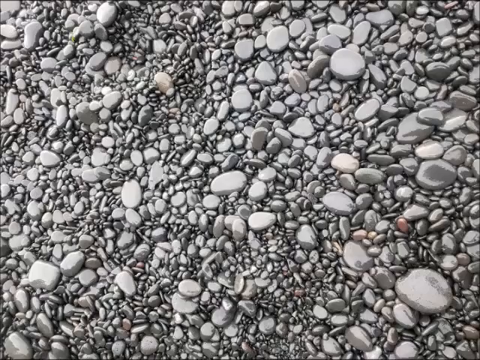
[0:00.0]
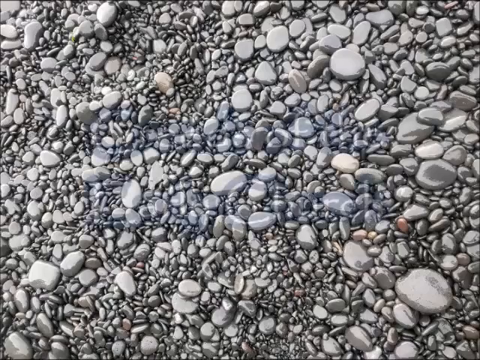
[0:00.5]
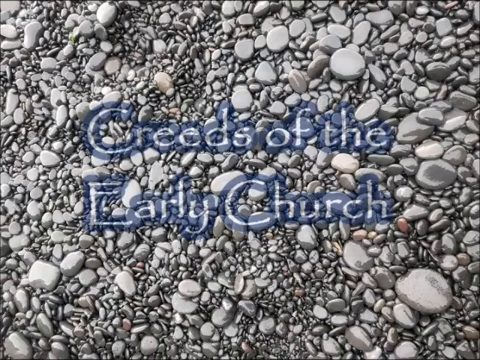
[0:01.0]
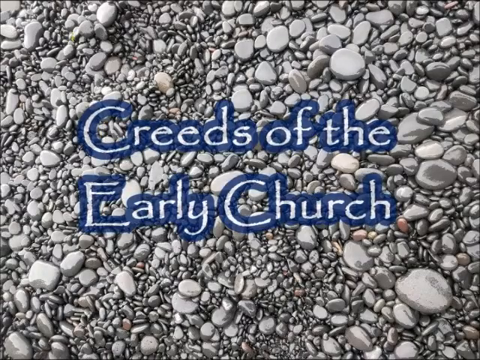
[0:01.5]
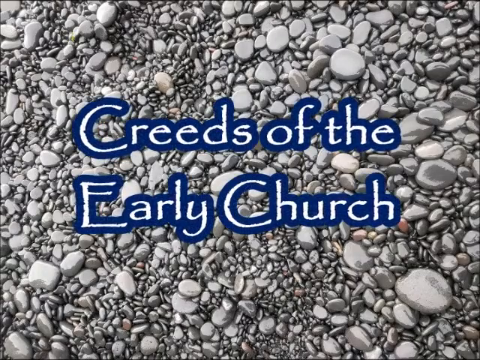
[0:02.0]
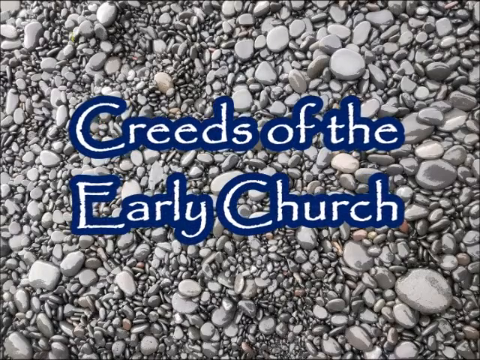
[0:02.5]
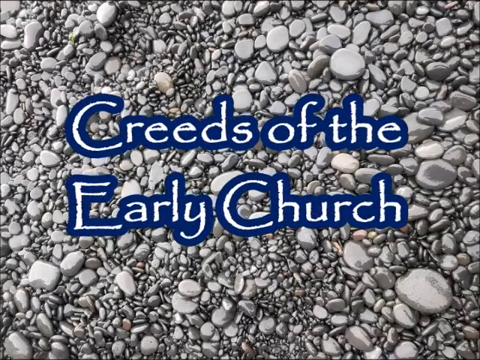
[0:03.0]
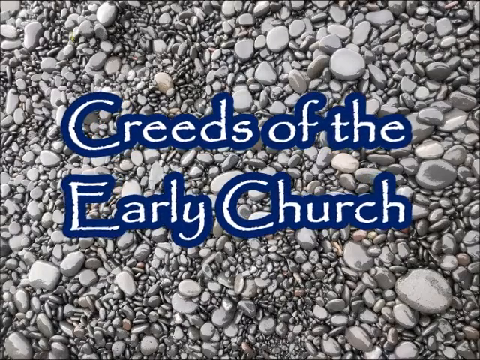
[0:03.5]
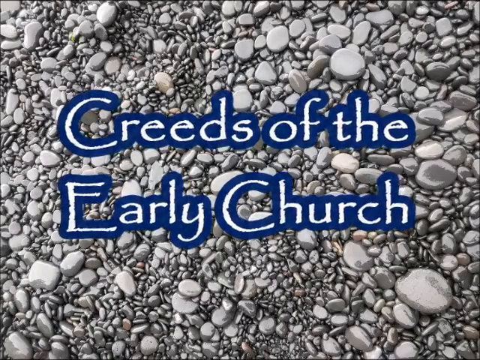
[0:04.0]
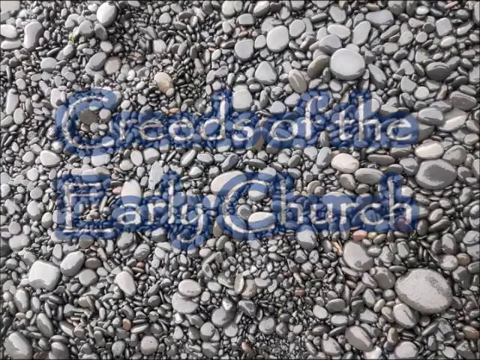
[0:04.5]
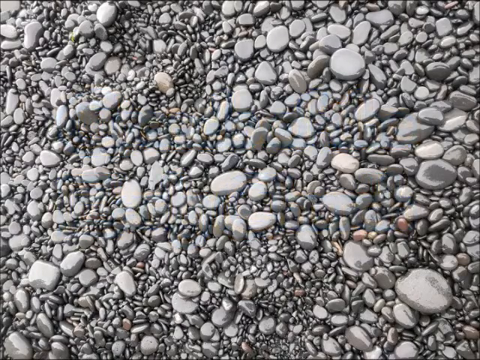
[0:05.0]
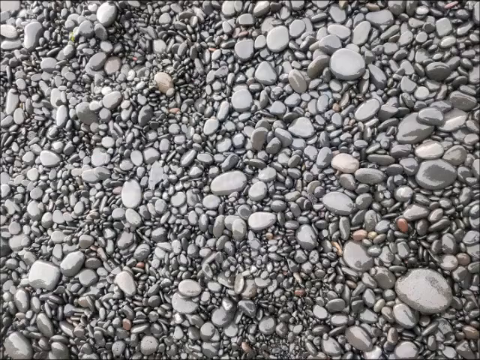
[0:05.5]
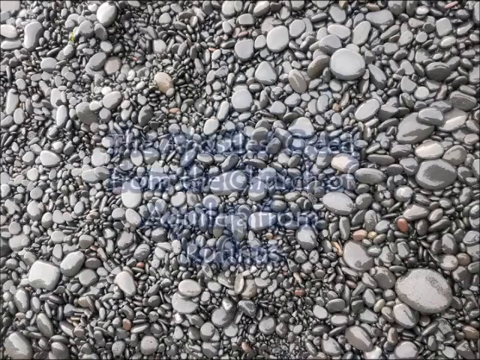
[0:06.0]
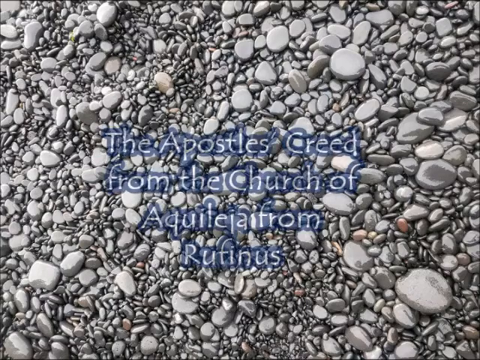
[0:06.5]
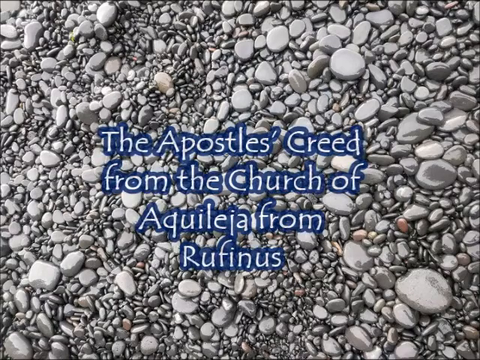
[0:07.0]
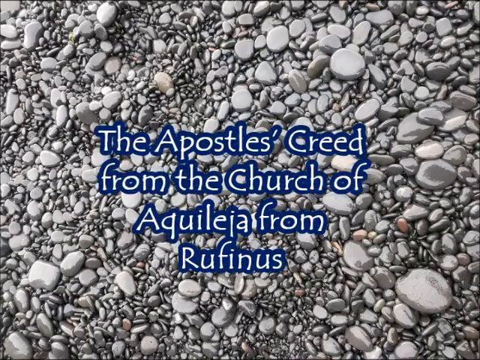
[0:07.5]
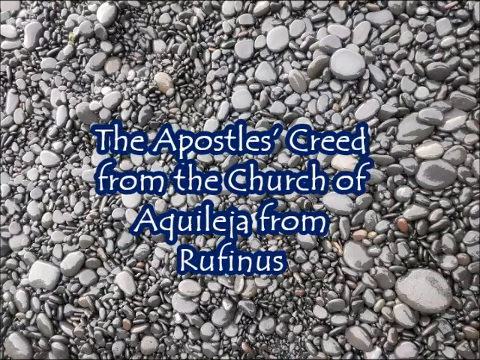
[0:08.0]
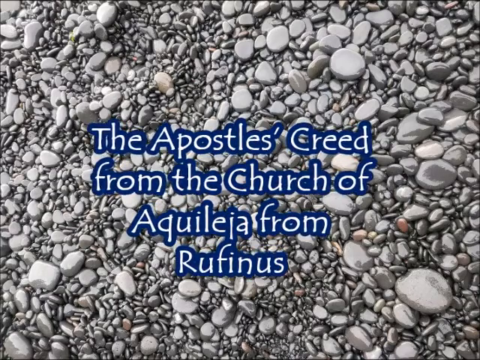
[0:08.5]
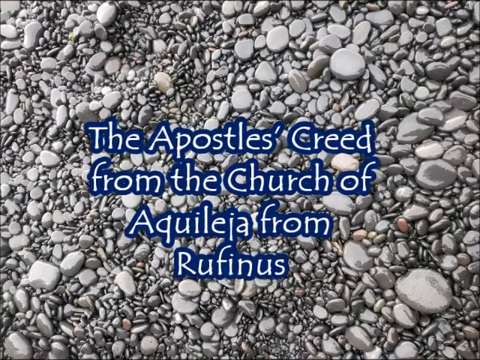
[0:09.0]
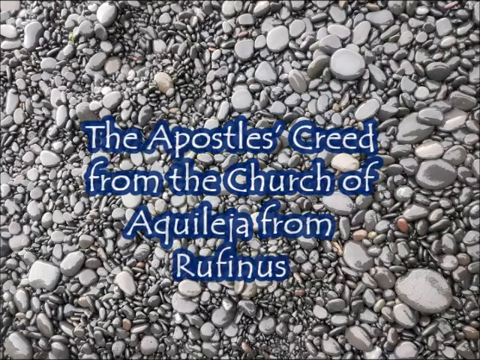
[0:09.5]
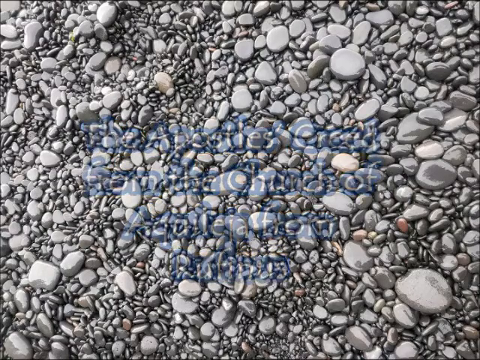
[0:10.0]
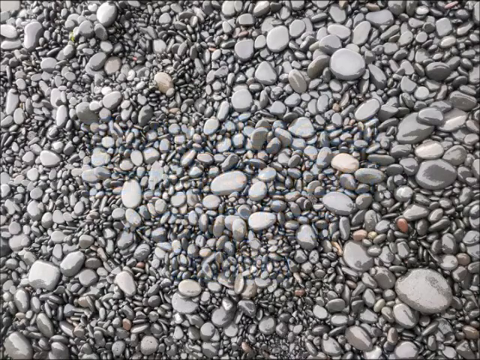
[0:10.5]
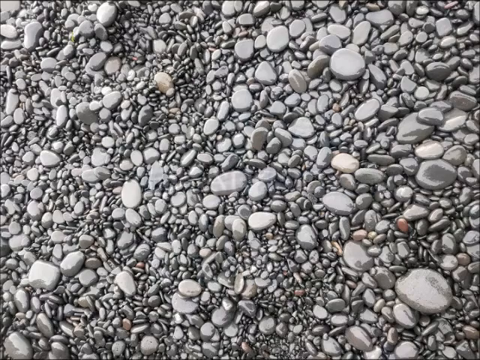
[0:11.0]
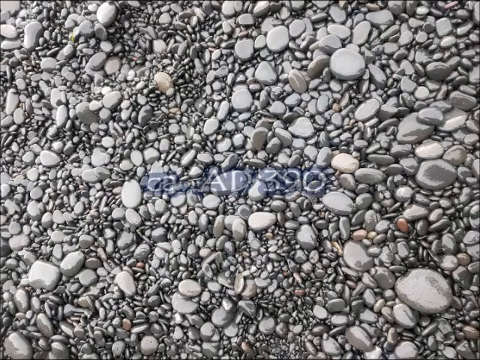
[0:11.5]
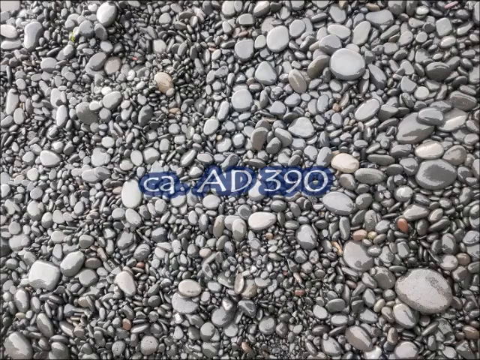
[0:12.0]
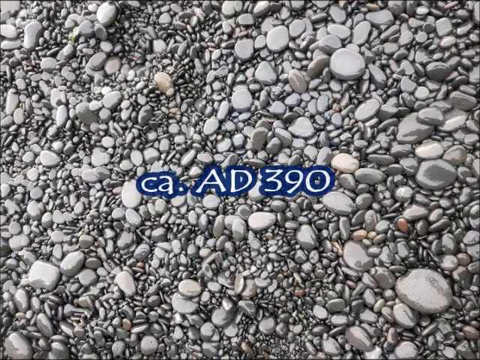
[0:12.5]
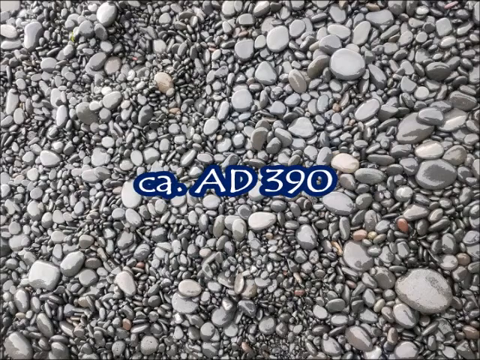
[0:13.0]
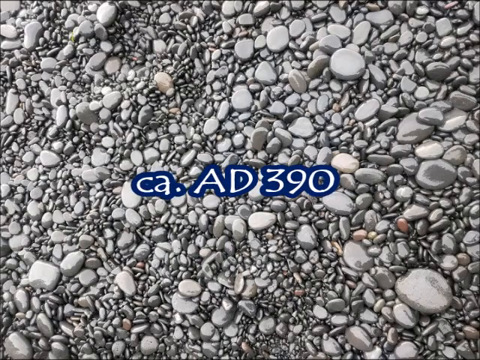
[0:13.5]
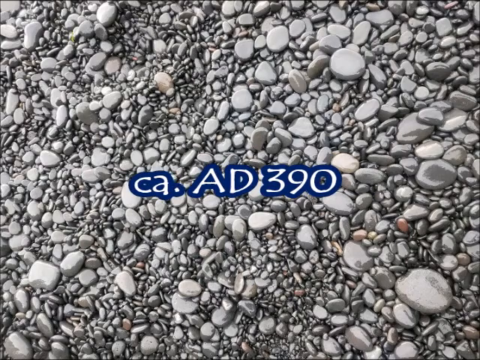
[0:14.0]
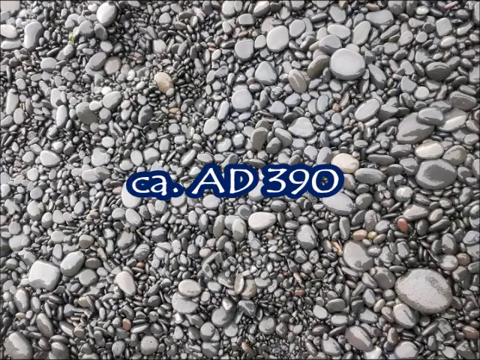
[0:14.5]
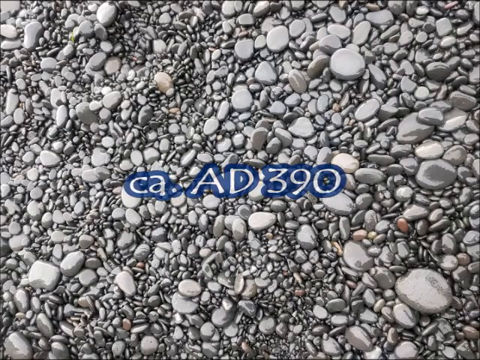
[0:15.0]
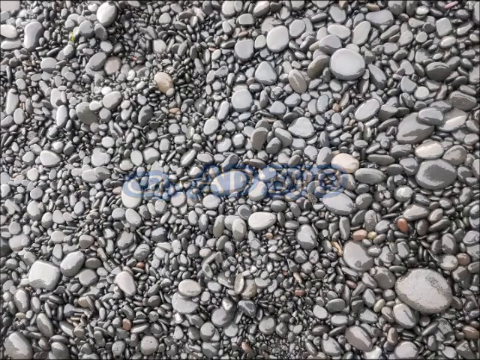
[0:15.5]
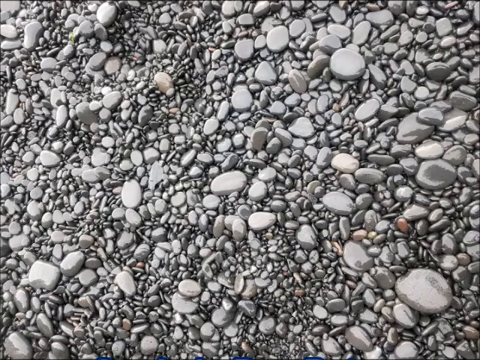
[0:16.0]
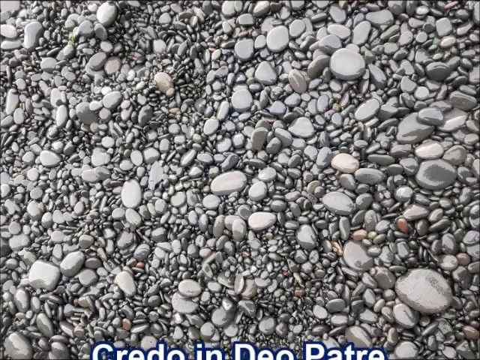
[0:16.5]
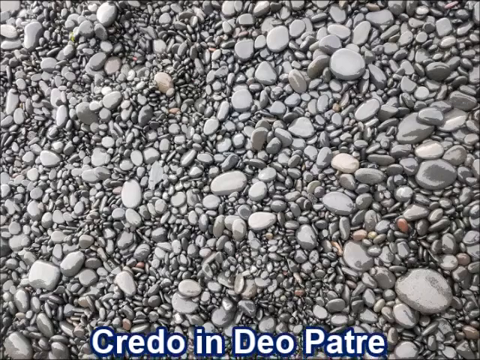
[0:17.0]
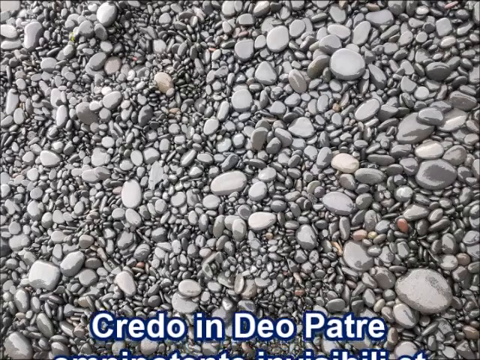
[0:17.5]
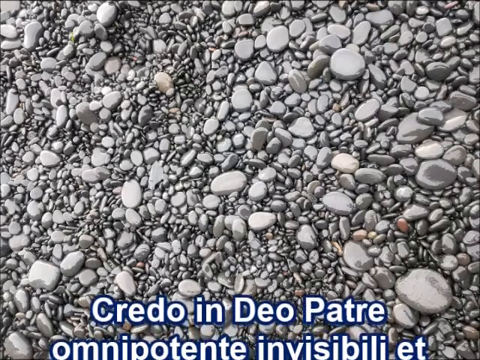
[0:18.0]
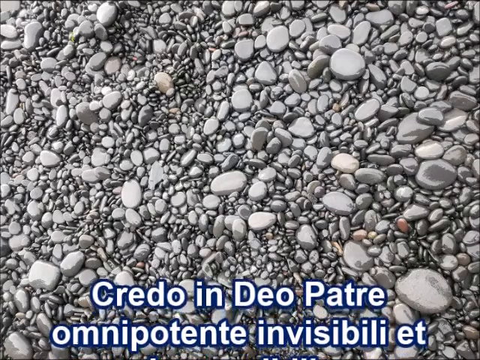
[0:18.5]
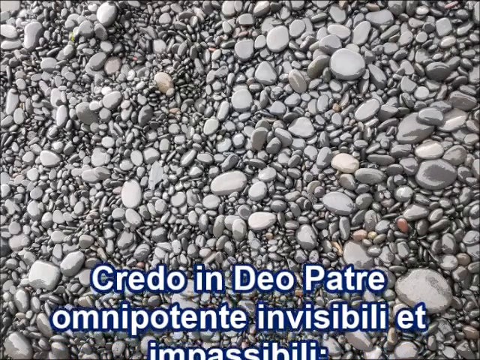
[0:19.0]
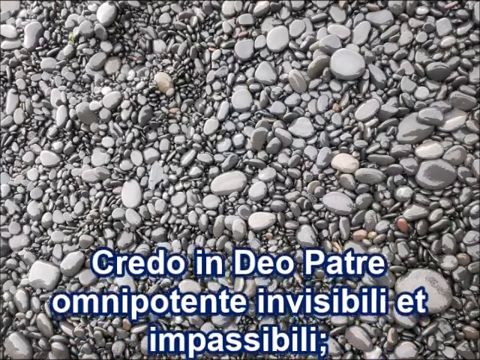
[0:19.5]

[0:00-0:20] The camera looks down at the ground, where there are many variously shaped rocks and pebbles. They range in color from white and silver to light gray and dark gray, with a few tan and brown rocks scattered throughout. Some rocks are very small and others are very large. After a couple of seconds, words appear in the center of the screen in white letters with a dark blue outline. The first words read "CREEDS OF THE EARLY CHURCH". This stays on screen for several seconds before other words replace it: "THE APOSTLES CREED FROM THE CHURCH OF AQUILIA FROM RUFINUS". As these words pan out, the words "C A A D 390" appear. Several seconds later, words written in Spanish appear and move from the bottom to the top of the screen.